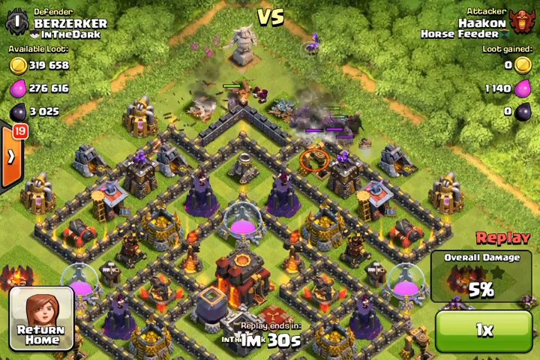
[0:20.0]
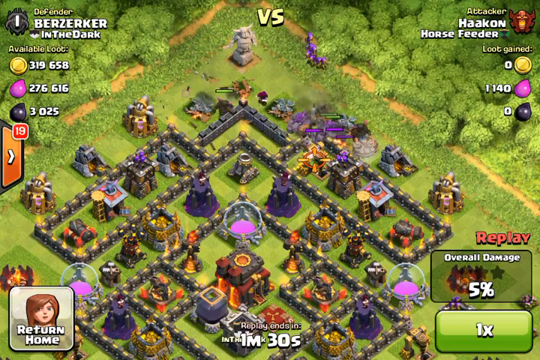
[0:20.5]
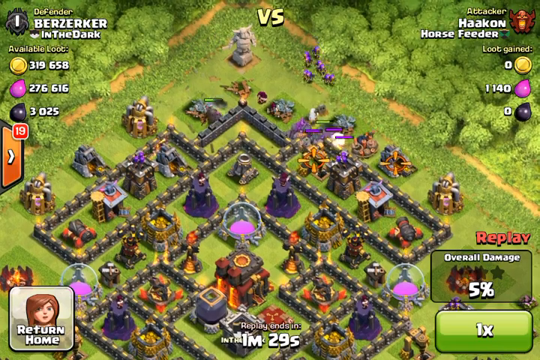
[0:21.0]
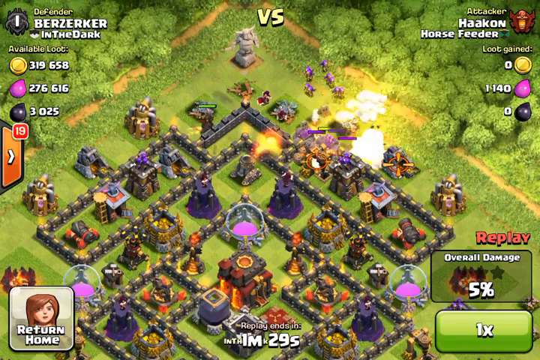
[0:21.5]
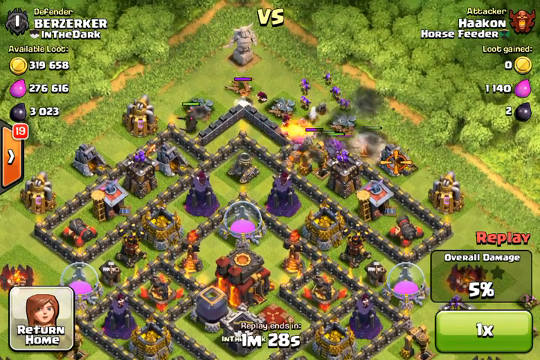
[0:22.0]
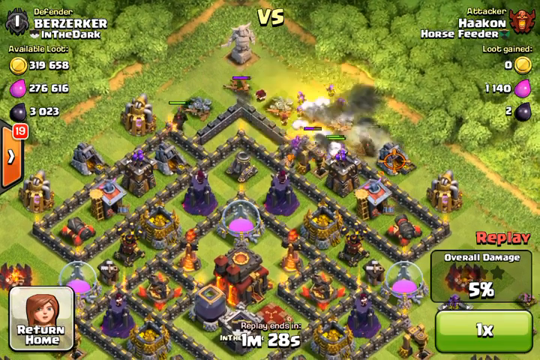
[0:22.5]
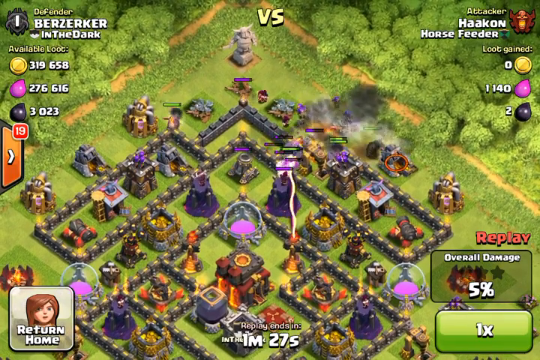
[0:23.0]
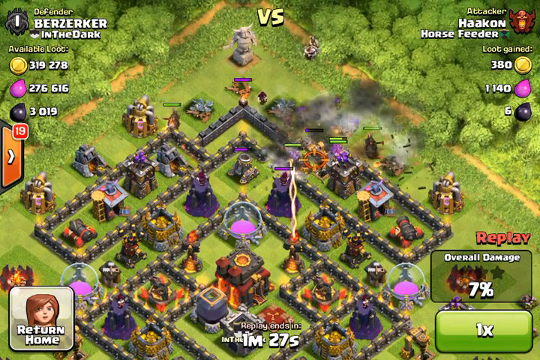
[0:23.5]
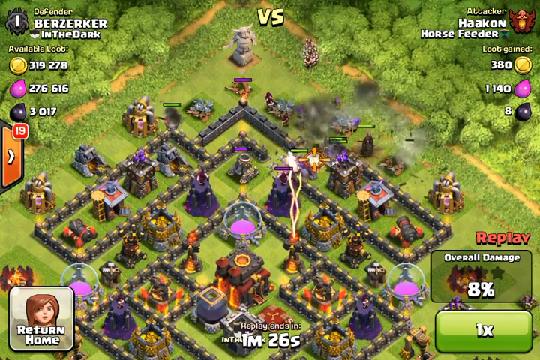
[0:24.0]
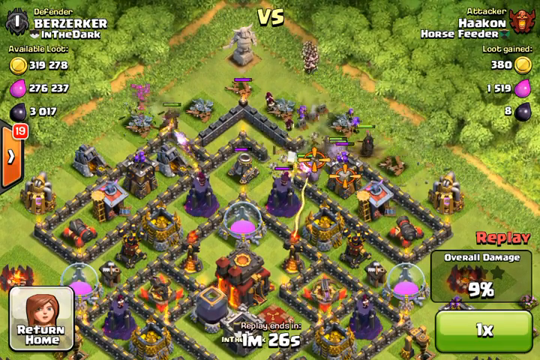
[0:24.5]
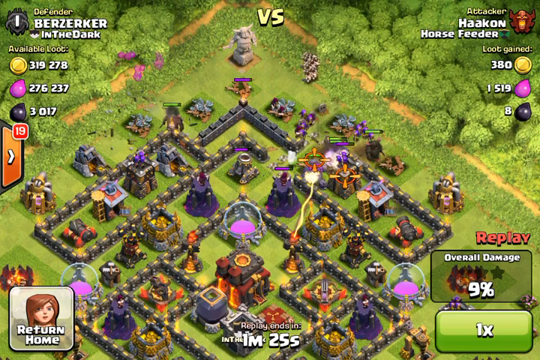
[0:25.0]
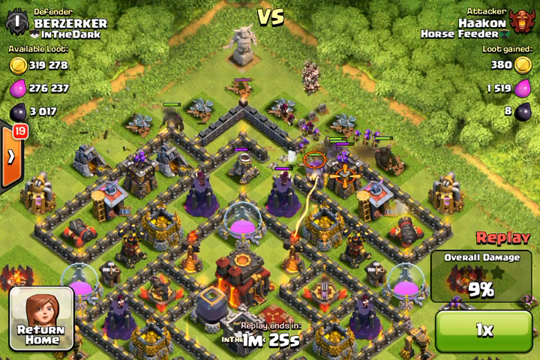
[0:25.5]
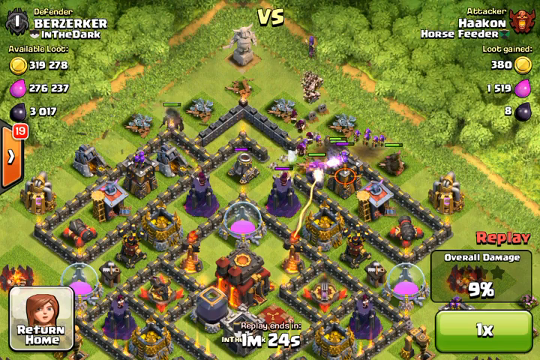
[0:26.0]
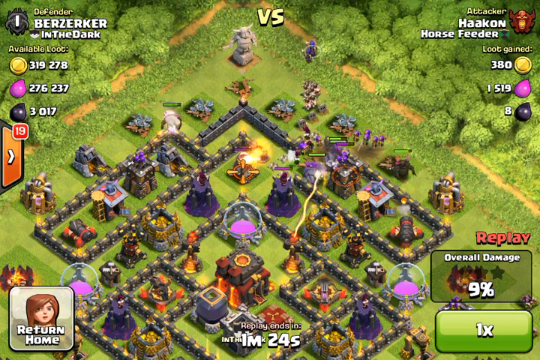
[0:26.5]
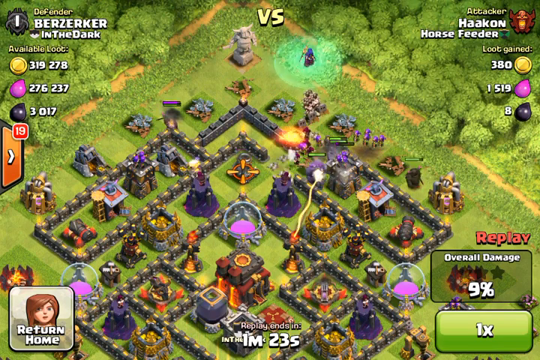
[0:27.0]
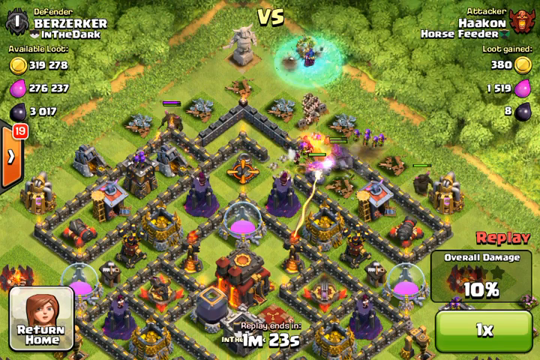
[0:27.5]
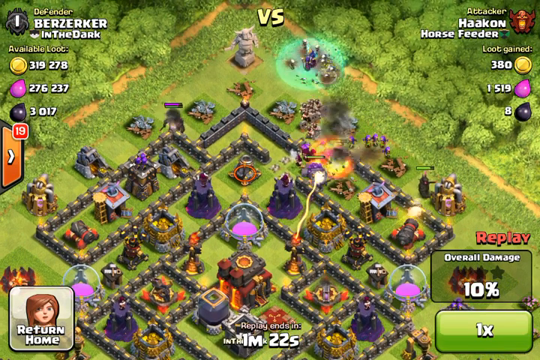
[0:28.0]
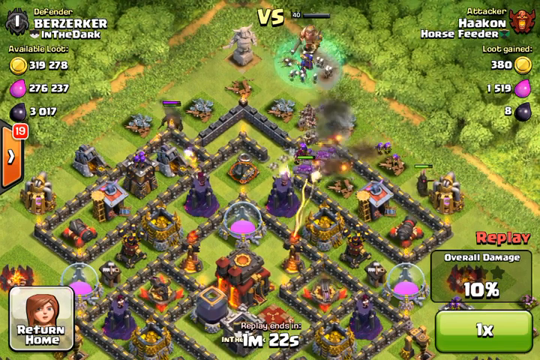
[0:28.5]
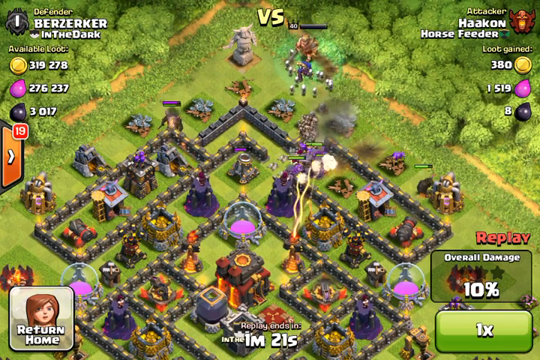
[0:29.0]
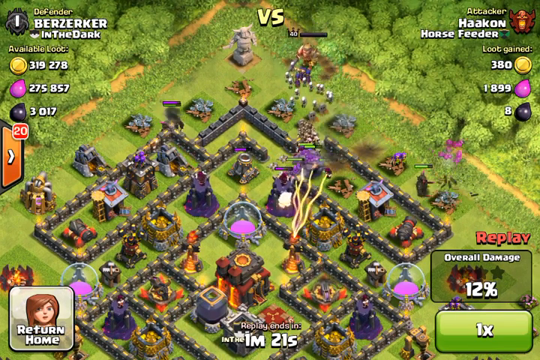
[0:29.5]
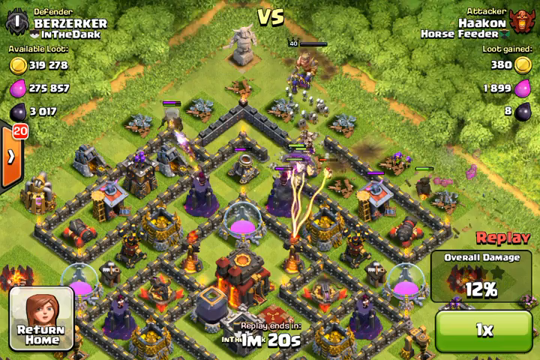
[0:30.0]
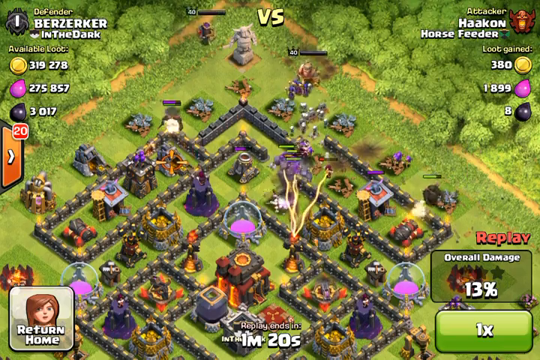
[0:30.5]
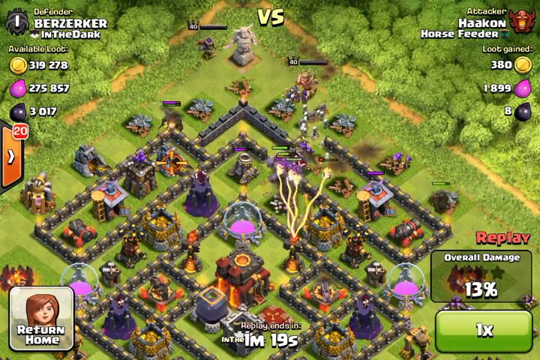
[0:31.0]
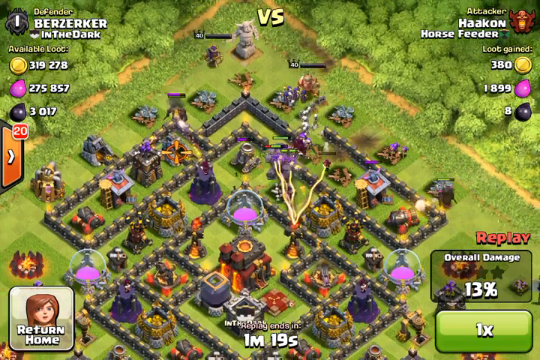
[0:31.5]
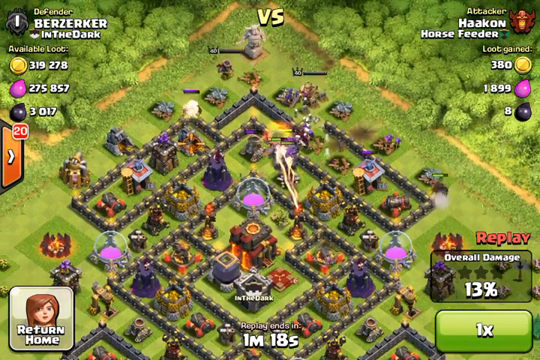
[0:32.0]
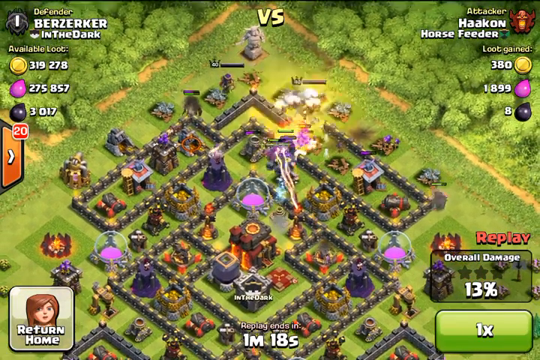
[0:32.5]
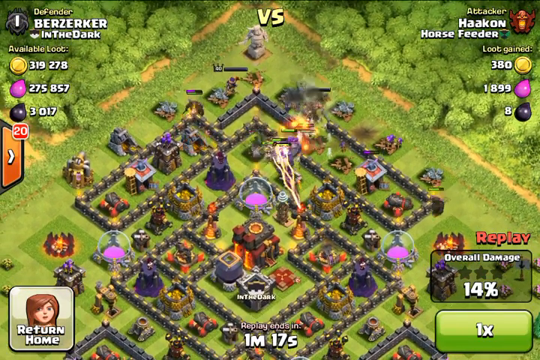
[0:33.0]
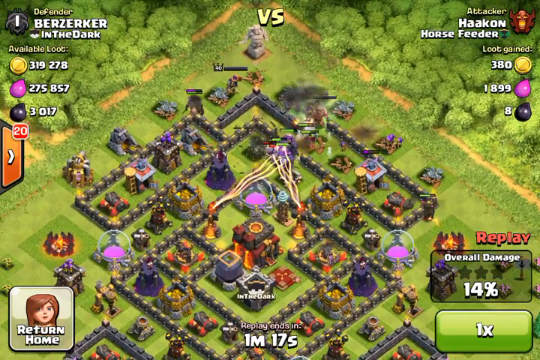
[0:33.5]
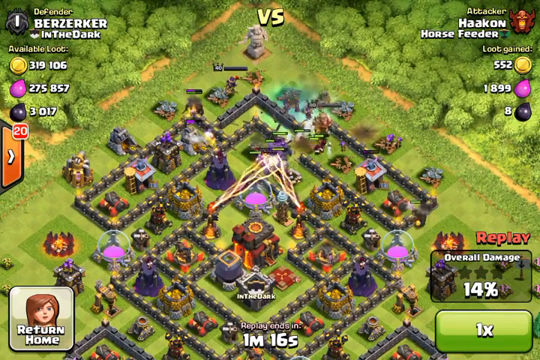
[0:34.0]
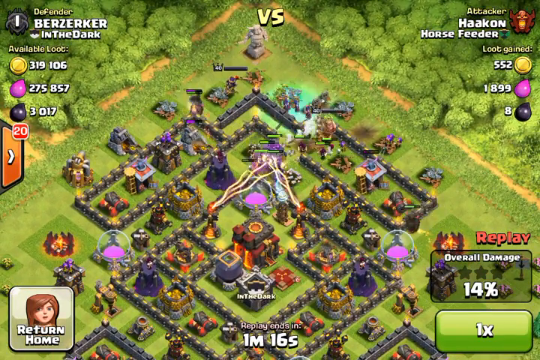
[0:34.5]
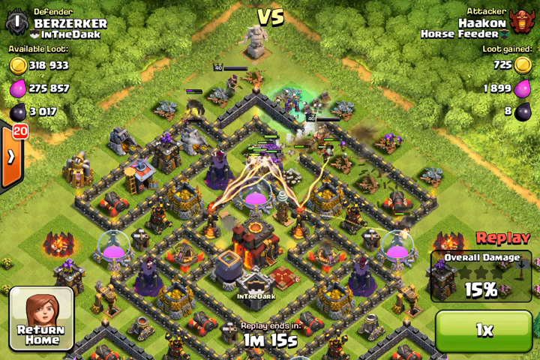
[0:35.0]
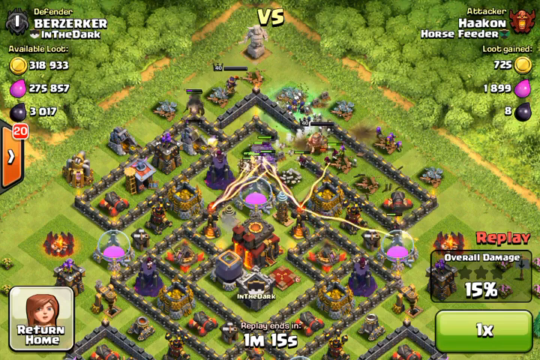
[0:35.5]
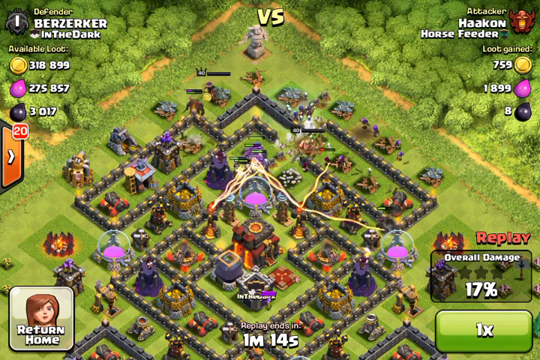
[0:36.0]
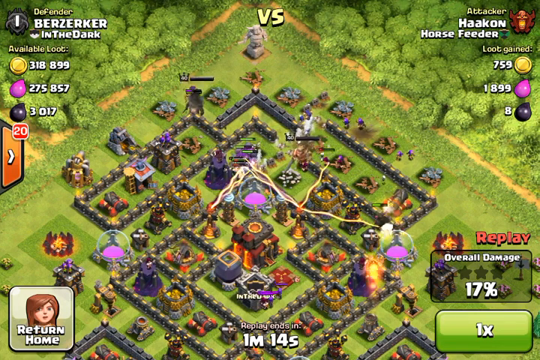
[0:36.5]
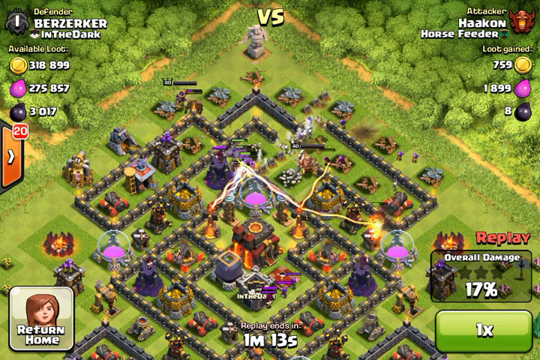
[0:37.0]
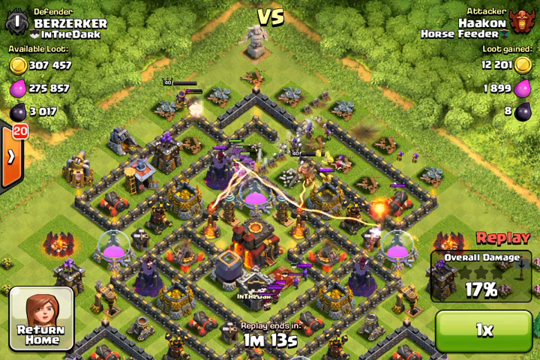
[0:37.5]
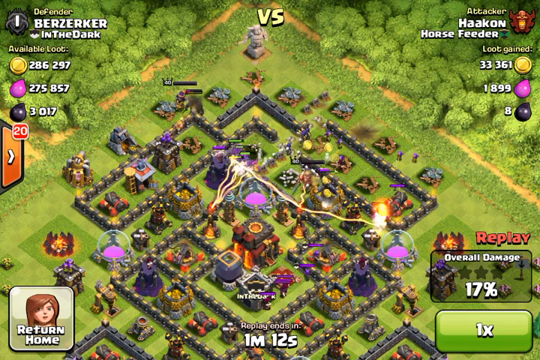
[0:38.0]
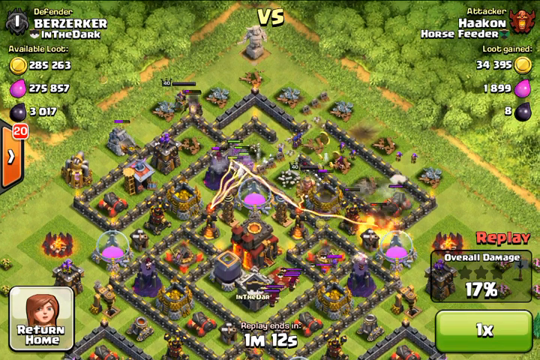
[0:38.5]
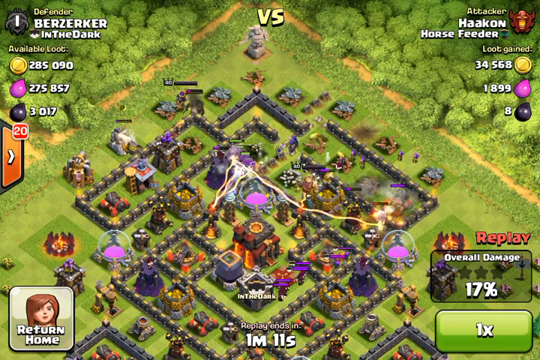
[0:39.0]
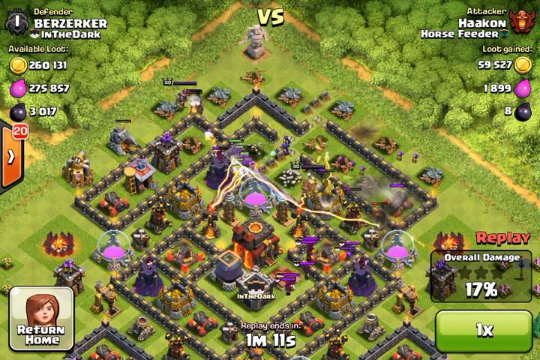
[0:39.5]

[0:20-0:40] An overhead view shows a battle in what looks to be Clash of Clans. The defender and the attacker each have stats. The available loot is mostly on the defender's side, at the city, with three sections of resources that apparently count as full. The attacker, Horse Feeder, has an area showing loot gained, and its resource spots start to fill up as the attackers enter the city, where many energy bolts and other small NPCs walk around with health meters. As destruction occurs, the attacker's loot gained rises while the defender's loot falls. On the right side is "replay" along with overall damage, which climbs from 5% into double digits, and below that is what looks to be a 1x.